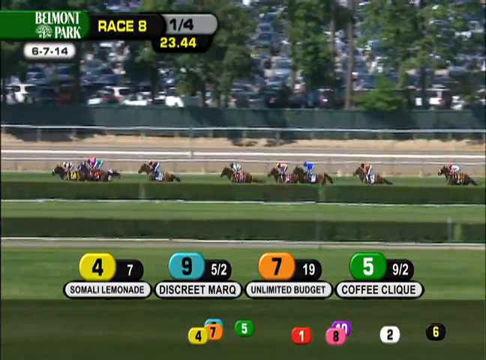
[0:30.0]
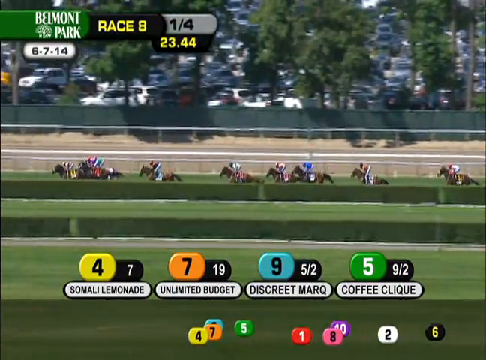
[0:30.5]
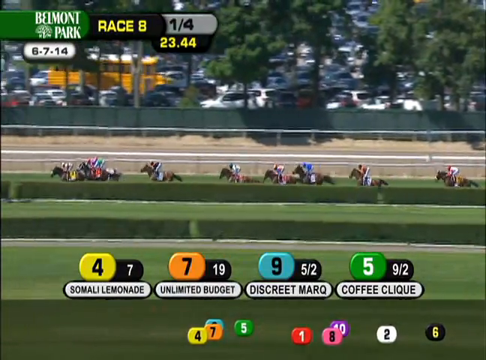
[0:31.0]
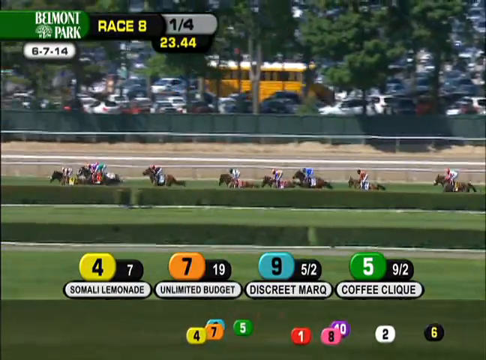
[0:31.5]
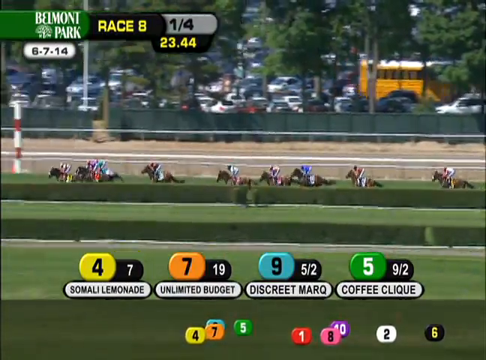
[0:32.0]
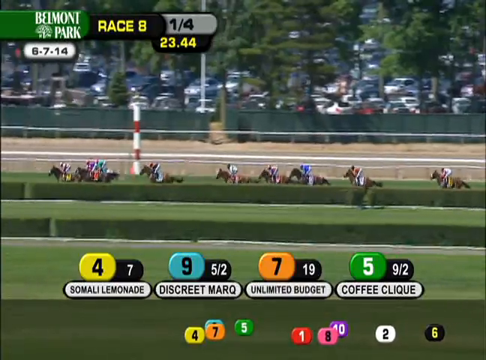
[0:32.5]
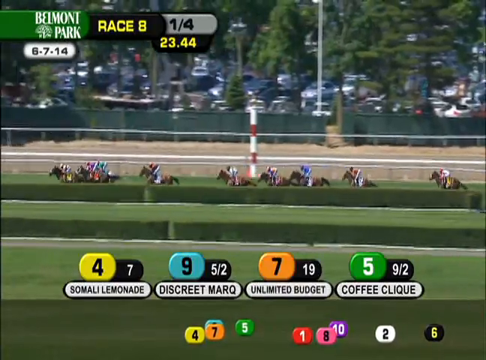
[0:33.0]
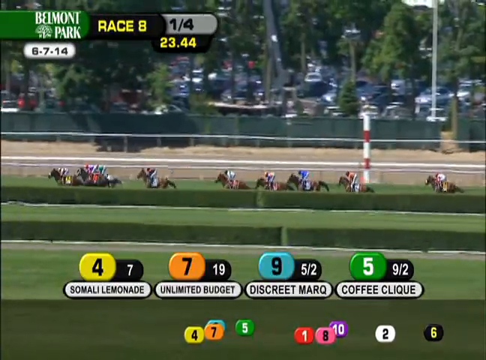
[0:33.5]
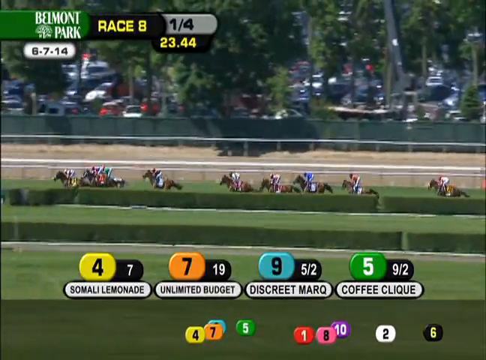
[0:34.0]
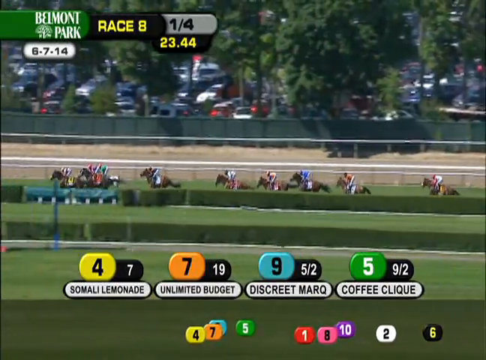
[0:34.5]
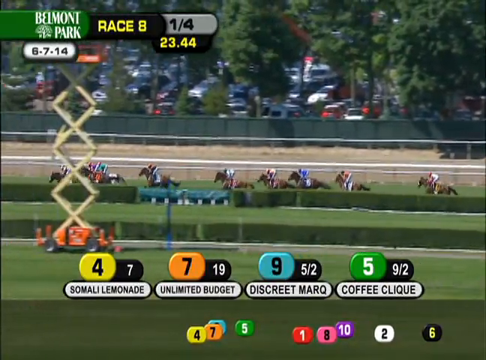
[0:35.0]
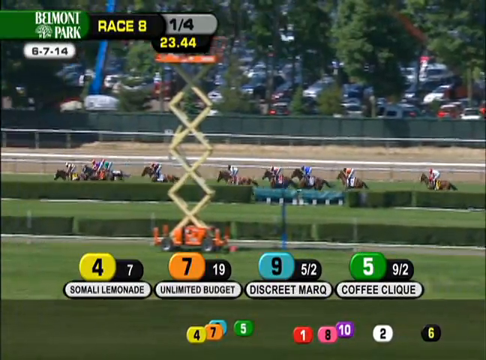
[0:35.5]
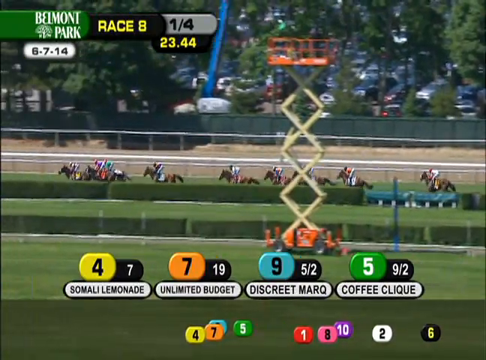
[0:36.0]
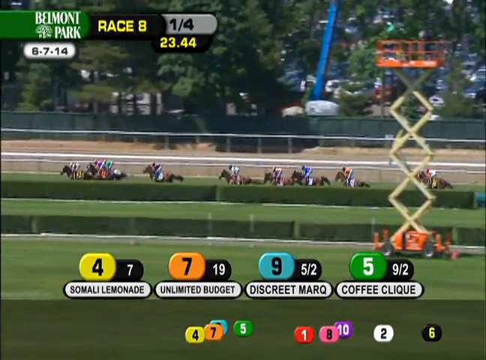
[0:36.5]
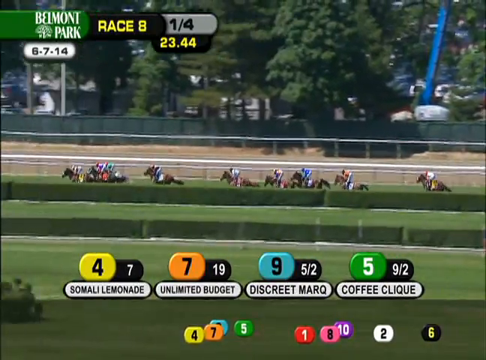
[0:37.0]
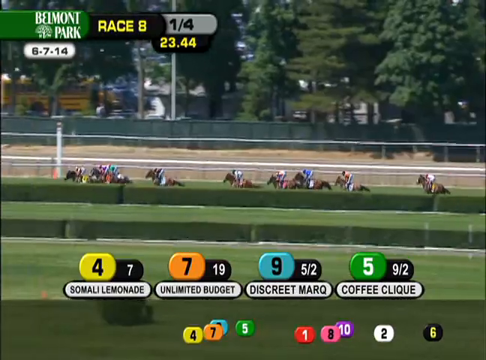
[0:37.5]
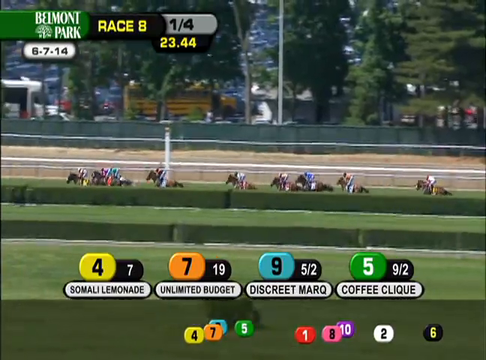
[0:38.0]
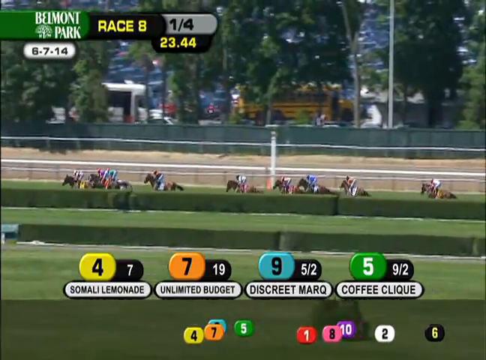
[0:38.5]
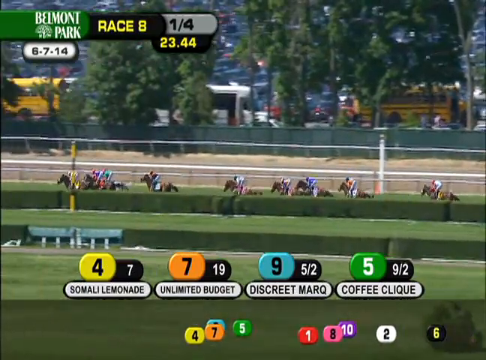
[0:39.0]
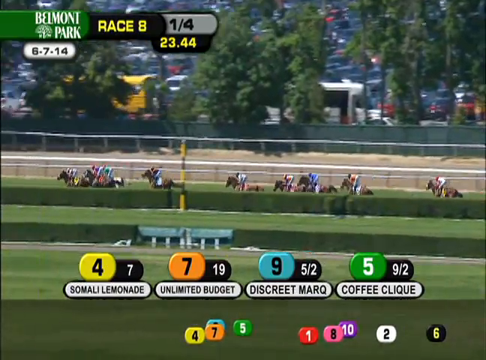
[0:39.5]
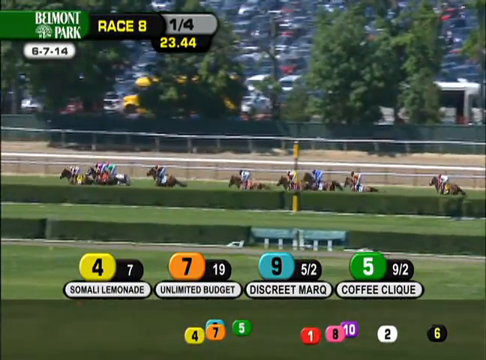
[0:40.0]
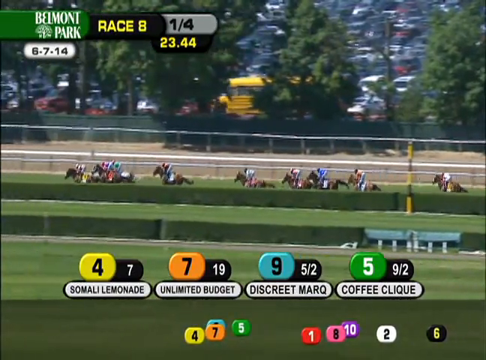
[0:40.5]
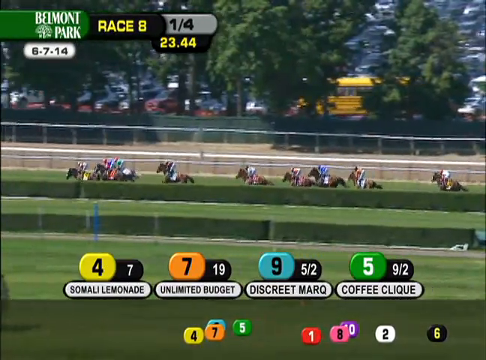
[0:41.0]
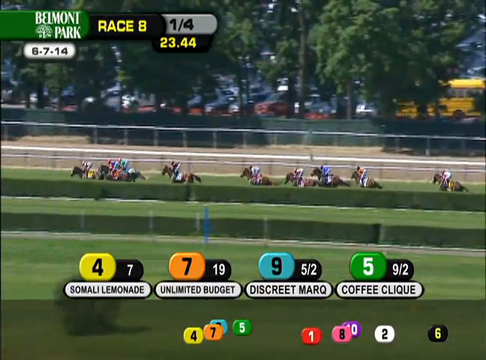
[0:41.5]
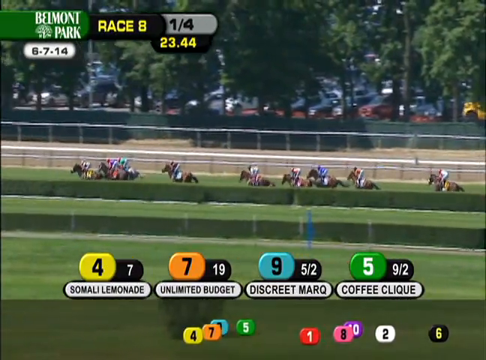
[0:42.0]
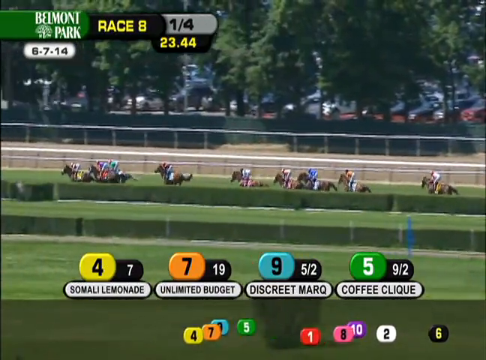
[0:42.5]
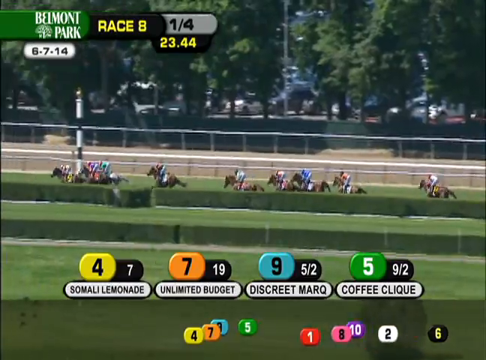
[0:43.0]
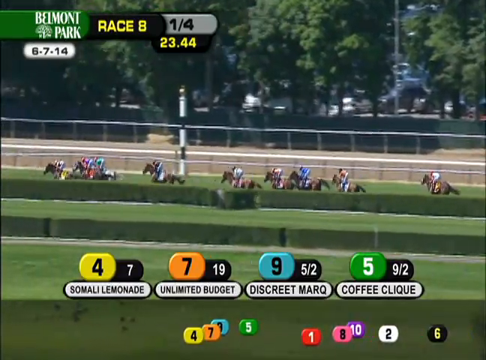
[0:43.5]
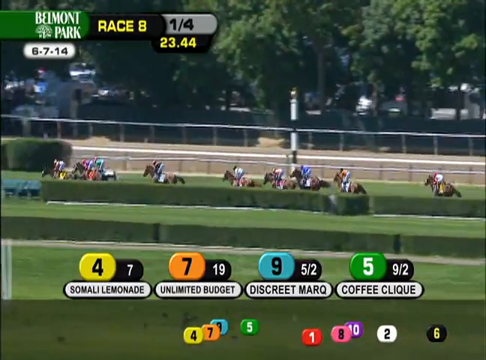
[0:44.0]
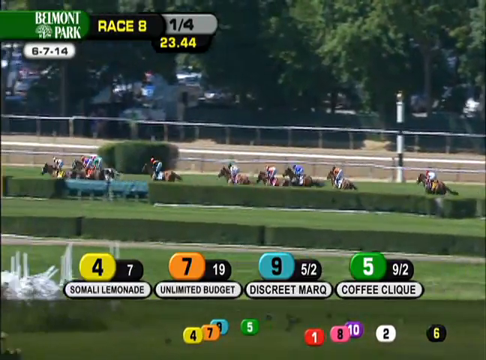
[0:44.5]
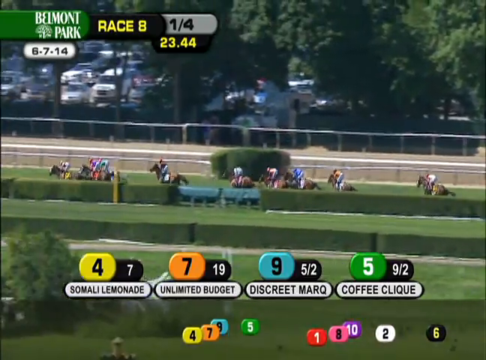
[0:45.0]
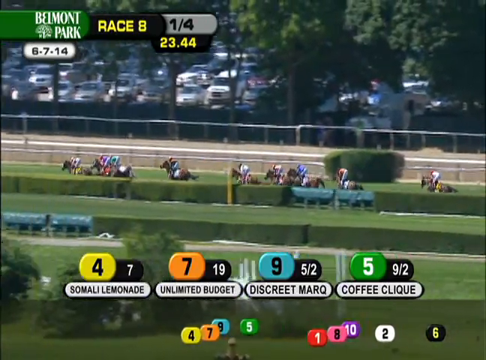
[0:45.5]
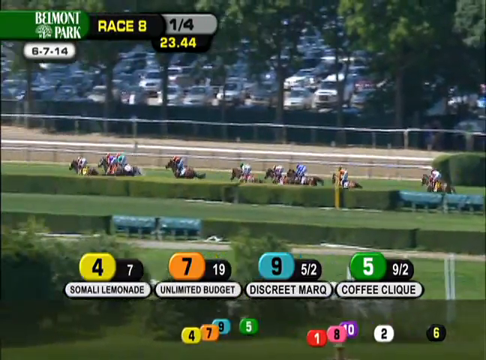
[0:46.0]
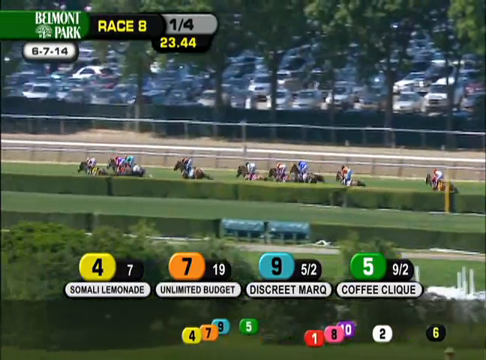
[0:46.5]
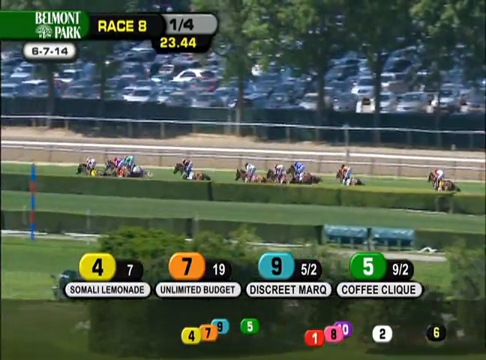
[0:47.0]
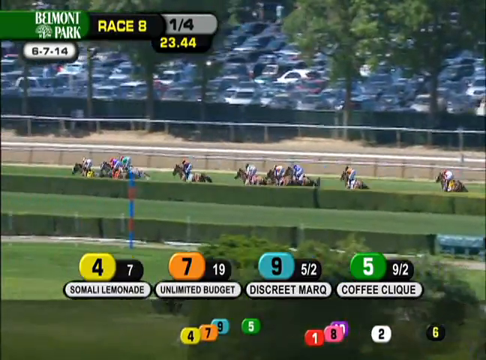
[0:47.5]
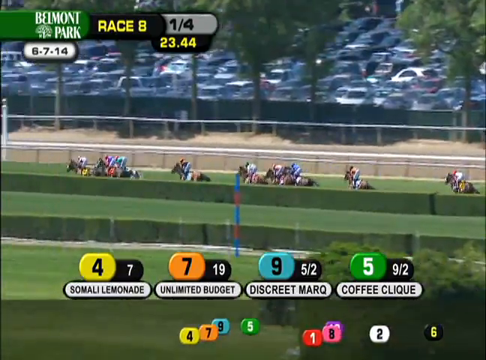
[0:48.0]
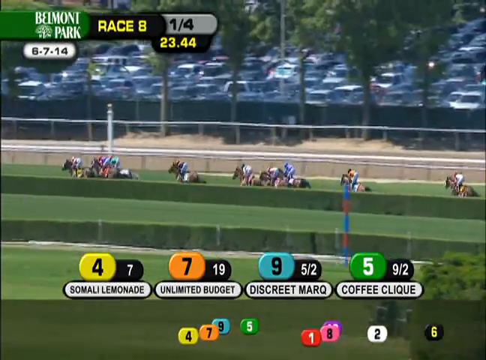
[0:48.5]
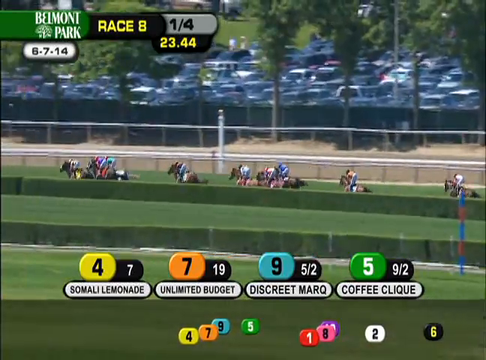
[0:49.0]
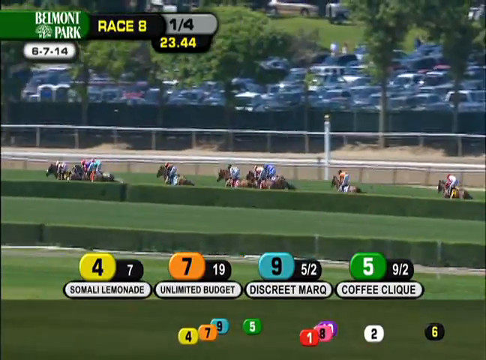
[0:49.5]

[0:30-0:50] The horse race continues at Belmont Park; this is race number 8, on June 7th, 2014, with 10 horses racing in total. A graphic at the bottom of the screen shows the top 4 horses and their current positions: horse number 4, Somali Lemonade, in 1st place; horse number 7, Unlimited Budget, in 2nd; horse number 9, Discreet Mark, in 3rd; and horse number 5, Coffee Cleek, in 4th. The horses run along a straight path. Below the top 4 rankings are icons for all 10 horses, moving in real time and getting closer and farther from each other based on the horses' actual positions. As the horses run down the path, they pass white guardrails, with trees in the background.